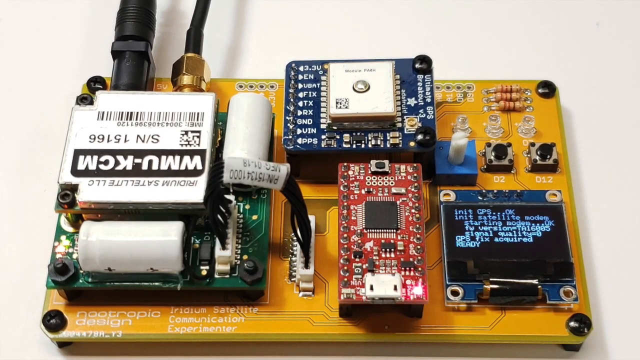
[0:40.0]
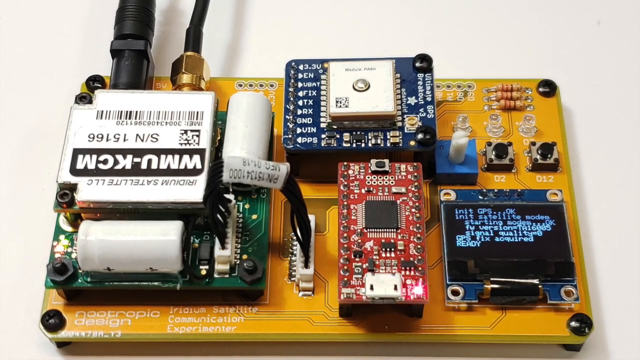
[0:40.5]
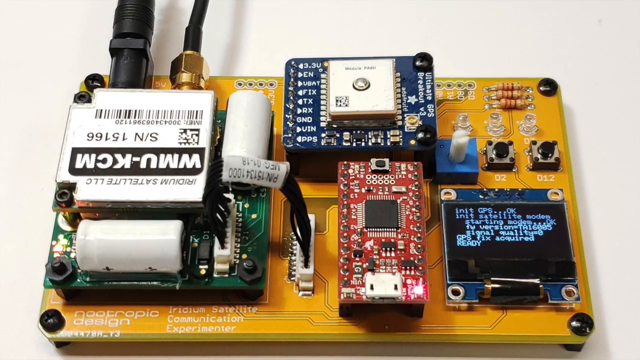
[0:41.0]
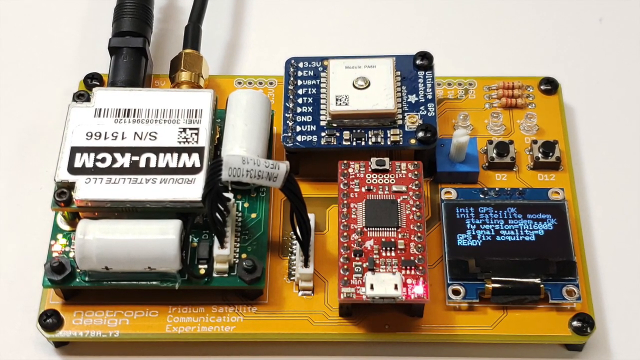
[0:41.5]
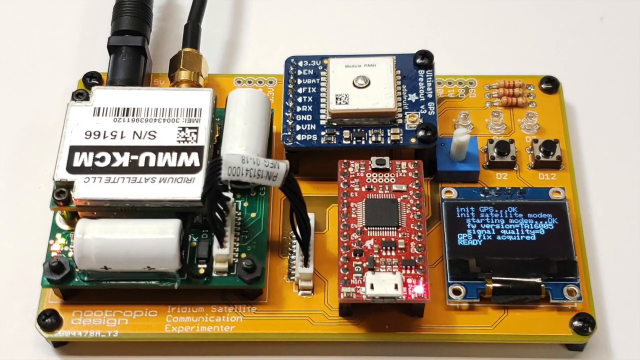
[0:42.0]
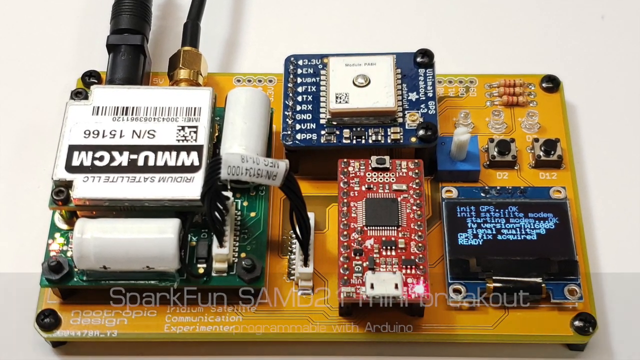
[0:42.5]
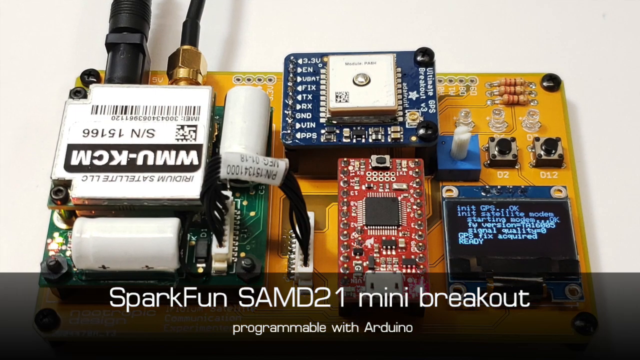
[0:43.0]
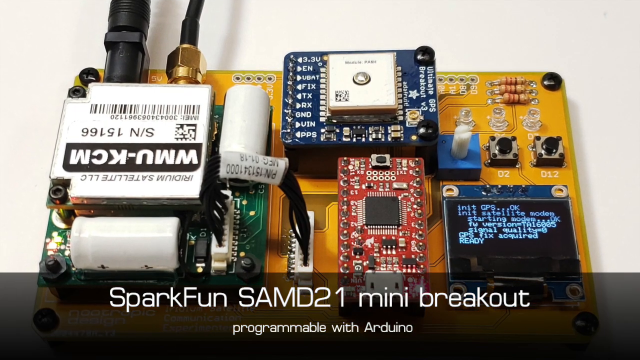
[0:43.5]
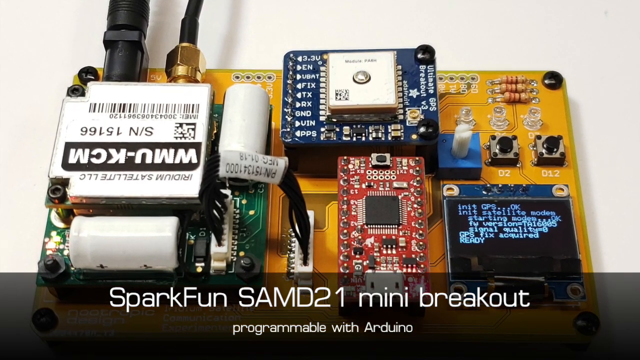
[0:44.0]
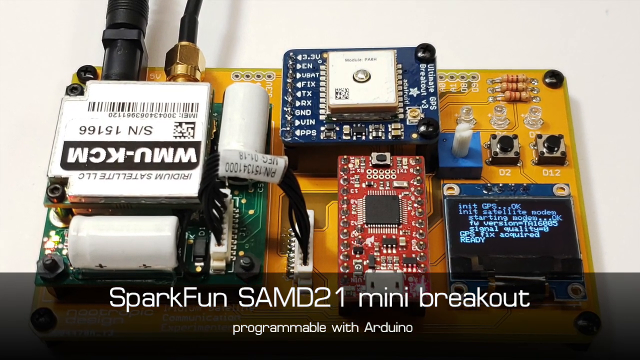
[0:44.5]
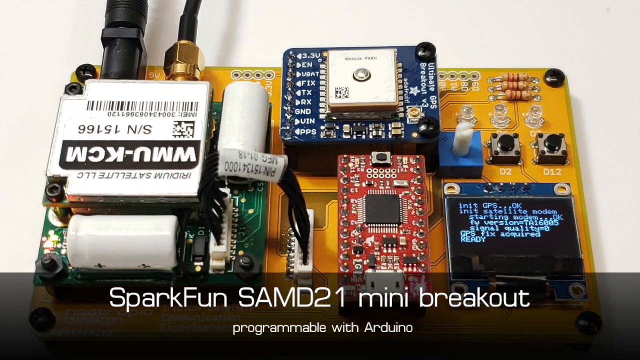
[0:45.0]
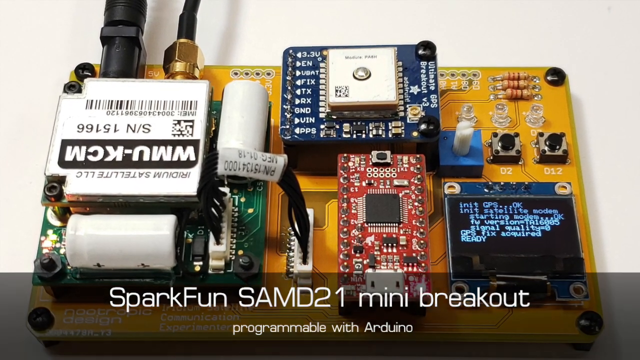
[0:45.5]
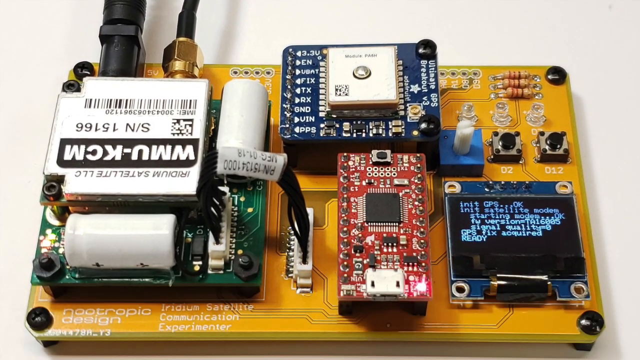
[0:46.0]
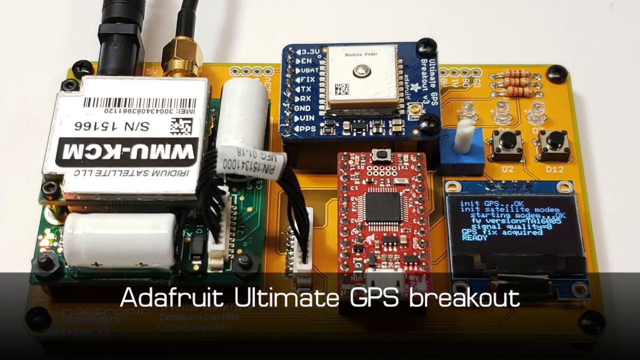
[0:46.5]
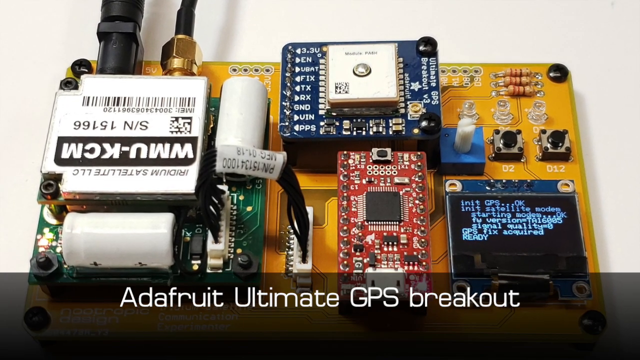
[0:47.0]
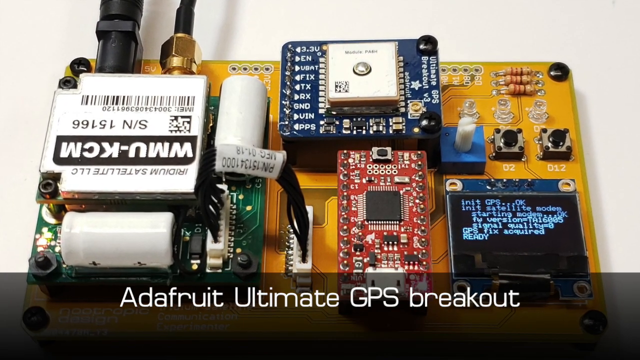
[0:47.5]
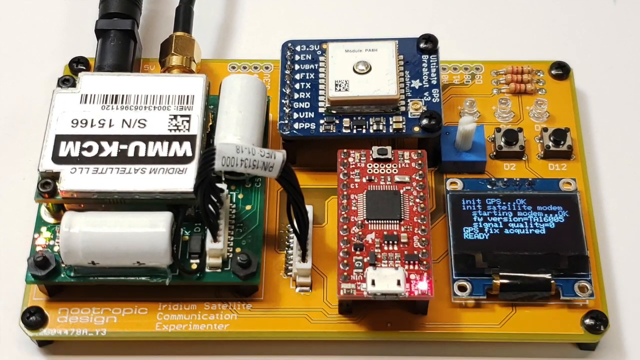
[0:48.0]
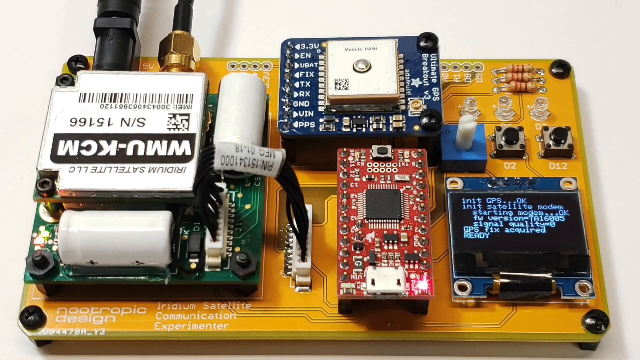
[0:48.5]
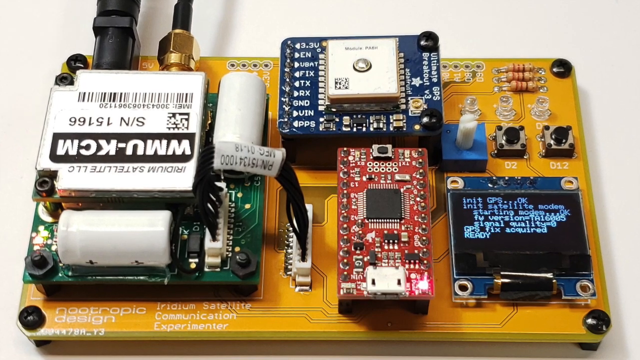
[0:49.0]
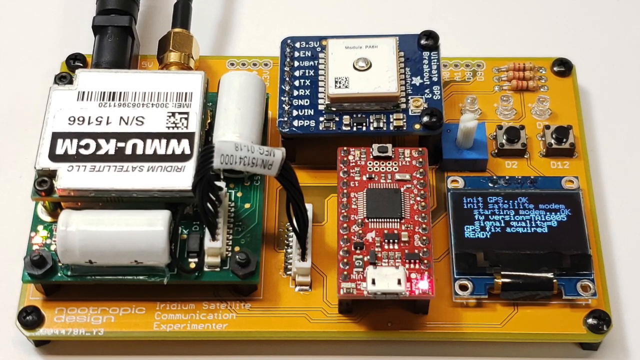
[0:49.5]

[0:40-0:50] The shot stays focused on the main box, which looks like the inside of something electrical that has been opened up. The component it is set on is kind of a goldish color and has some lettering in the bottom left. Wires connect the component on the left to the one on the right. A long rectangular white box has about seven black wires coming out of it. The camera pans in very slowly, and white text across the bottom reads "SparkFun, SAMD 21, mini breakout, programmable with Arduino," followed by white text across the bottom reading "Adafruit Ultimate GPS Breakout" as the camera keeps slowly zooming in.